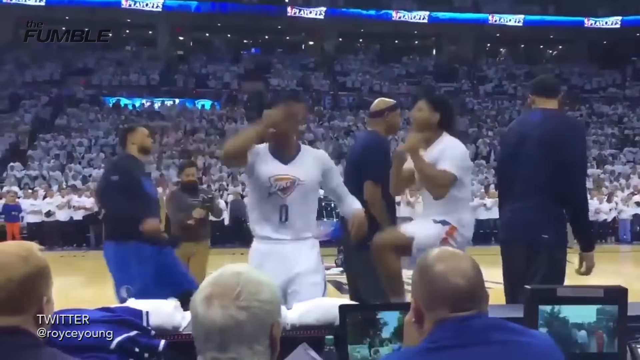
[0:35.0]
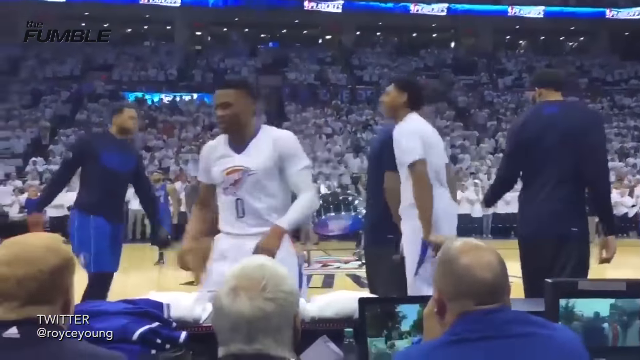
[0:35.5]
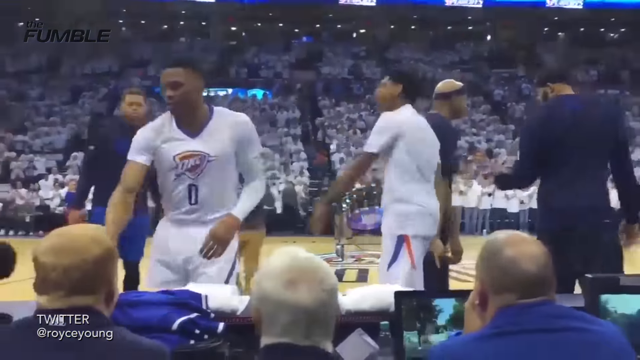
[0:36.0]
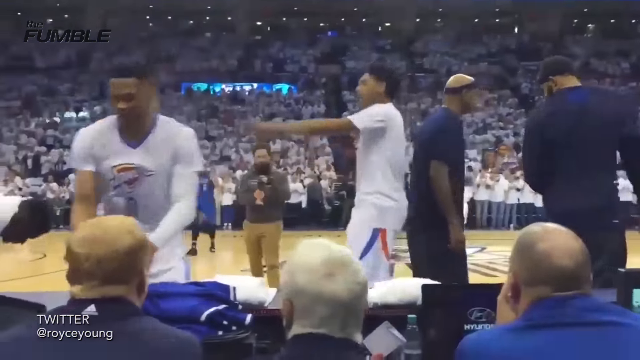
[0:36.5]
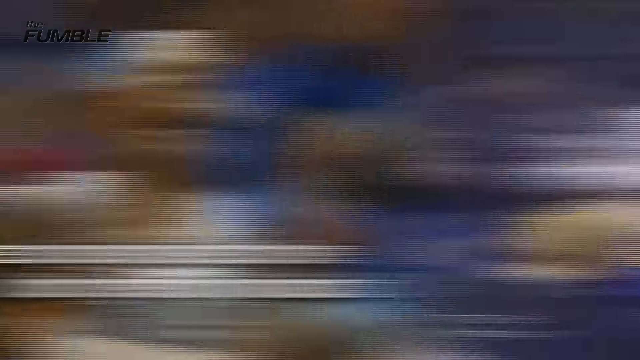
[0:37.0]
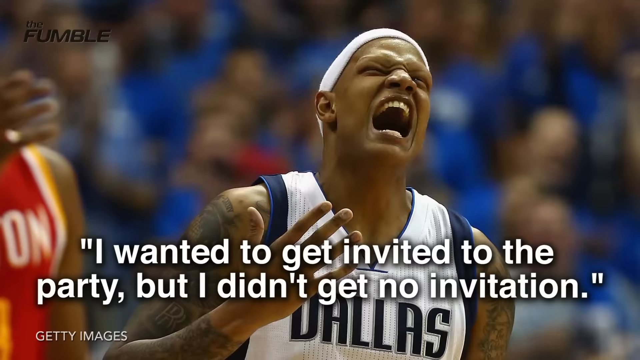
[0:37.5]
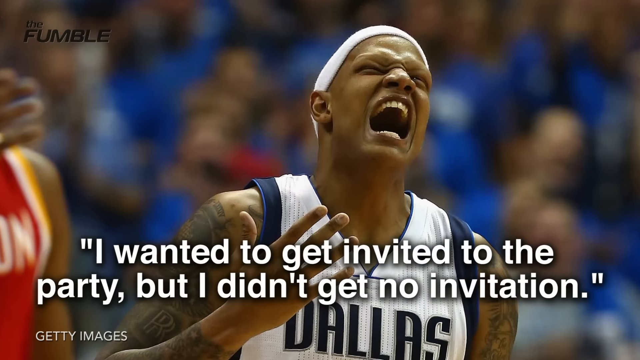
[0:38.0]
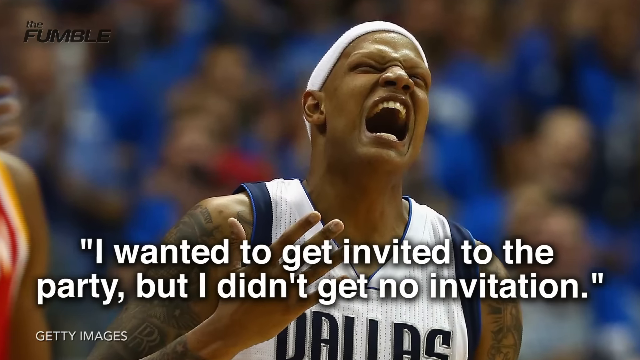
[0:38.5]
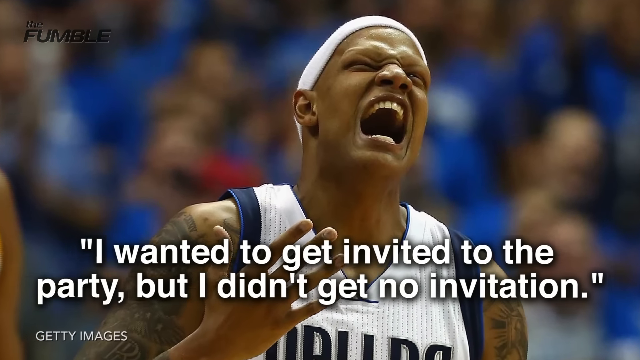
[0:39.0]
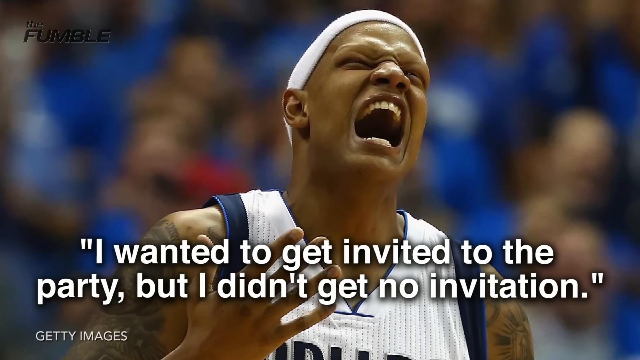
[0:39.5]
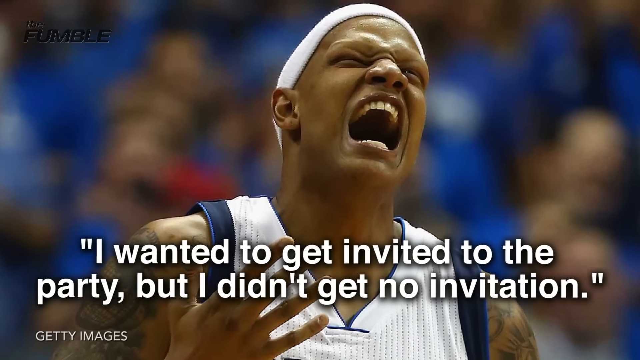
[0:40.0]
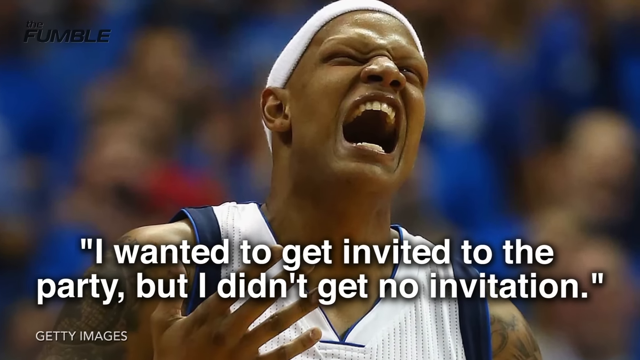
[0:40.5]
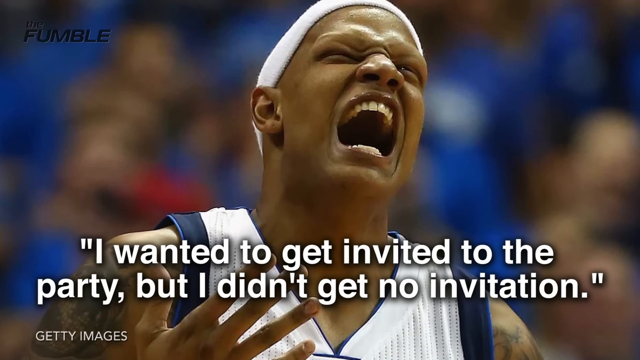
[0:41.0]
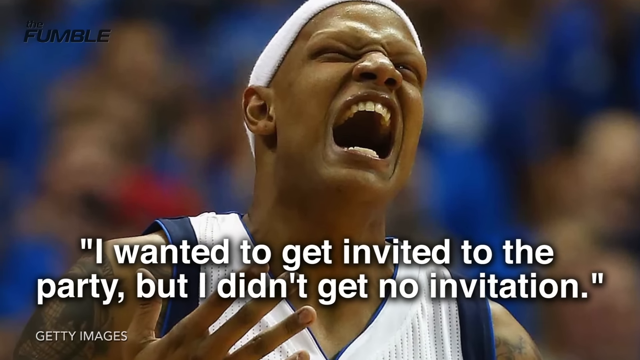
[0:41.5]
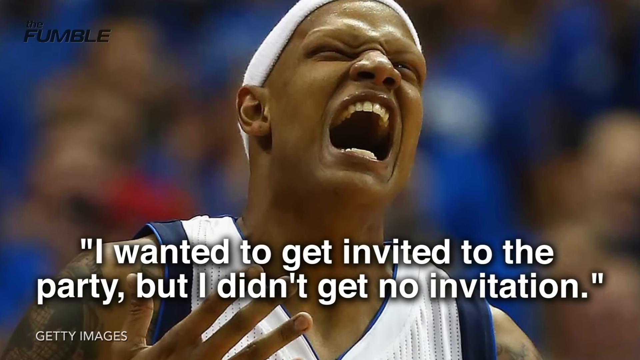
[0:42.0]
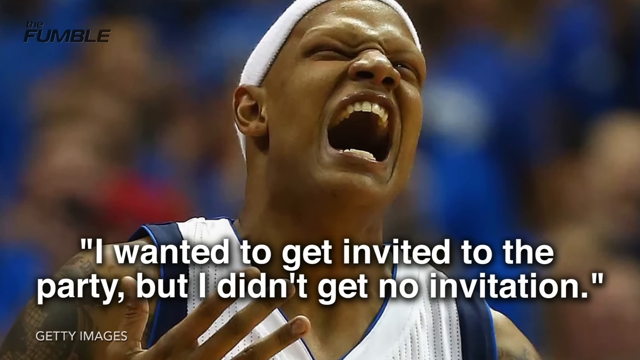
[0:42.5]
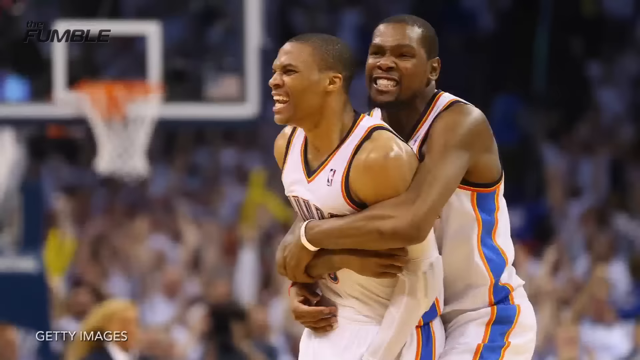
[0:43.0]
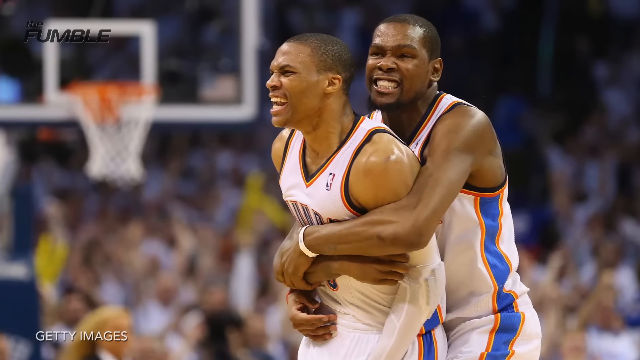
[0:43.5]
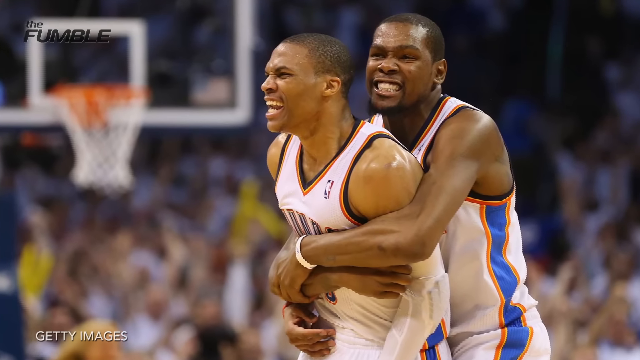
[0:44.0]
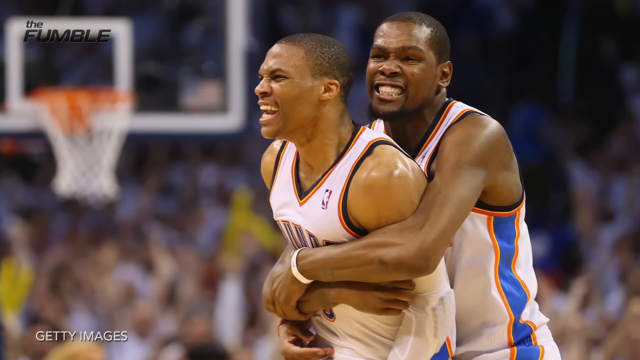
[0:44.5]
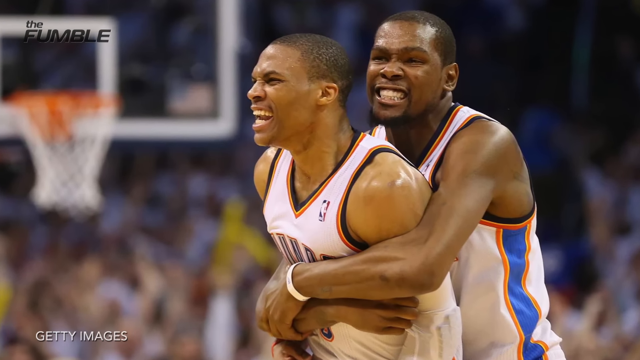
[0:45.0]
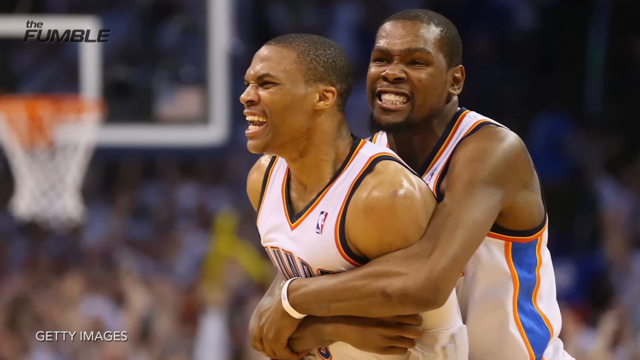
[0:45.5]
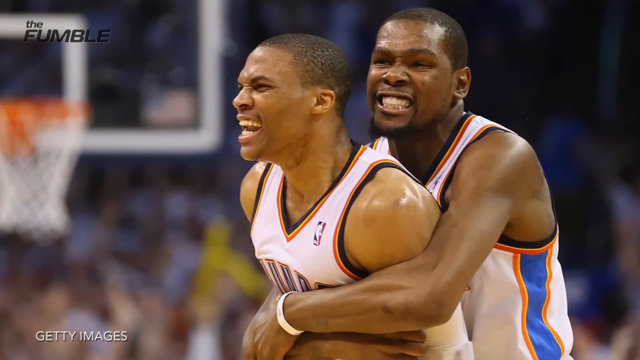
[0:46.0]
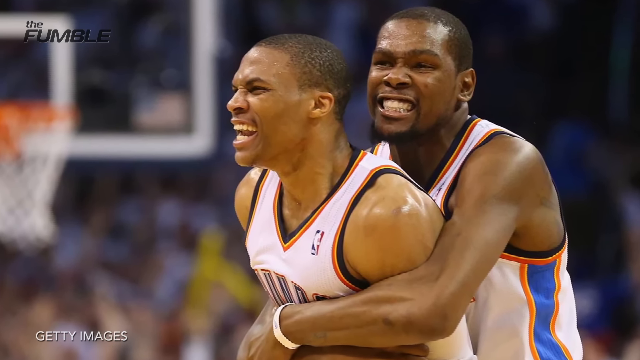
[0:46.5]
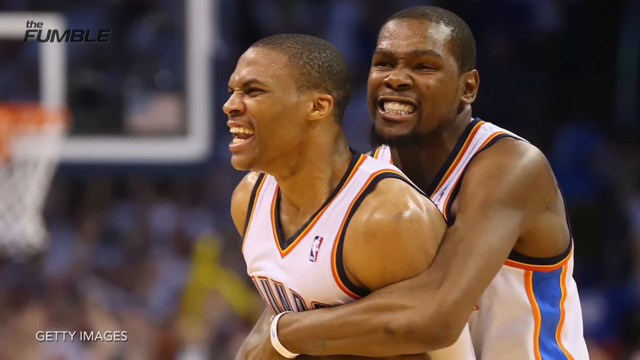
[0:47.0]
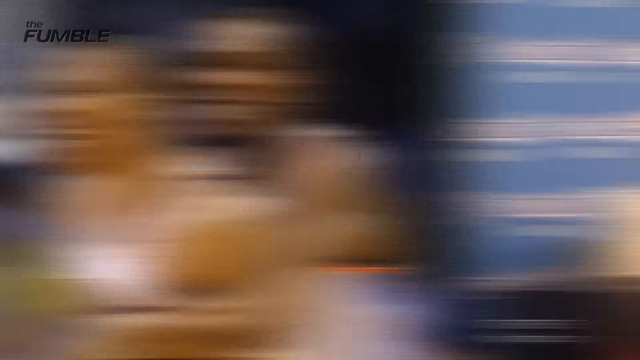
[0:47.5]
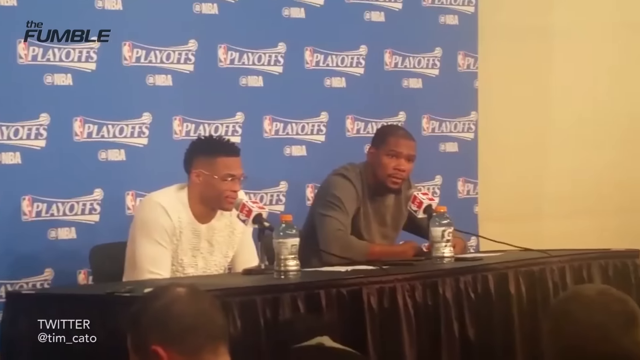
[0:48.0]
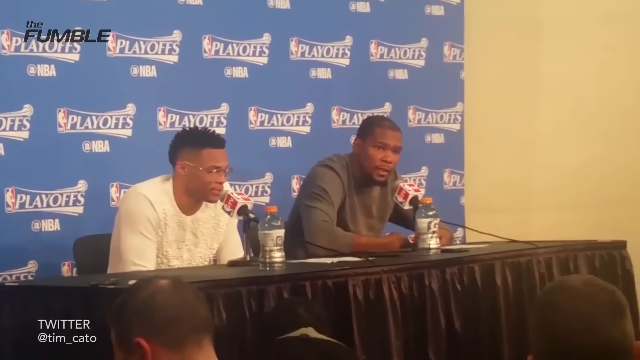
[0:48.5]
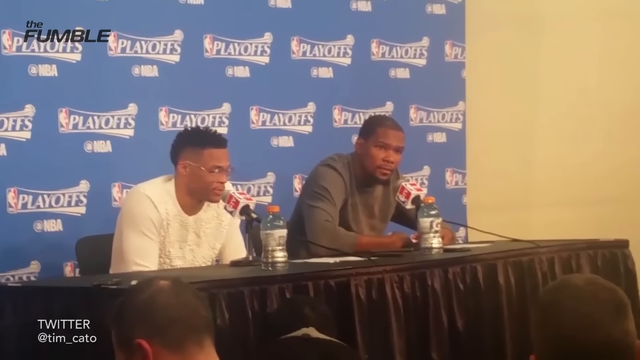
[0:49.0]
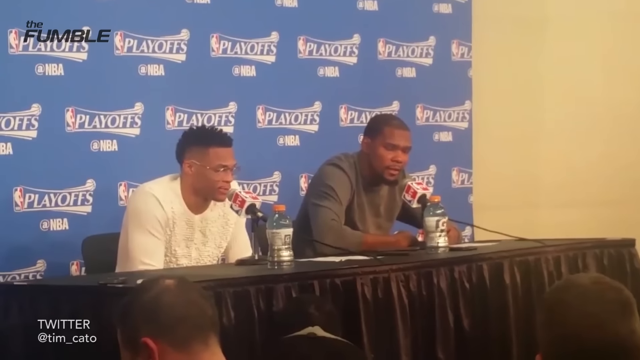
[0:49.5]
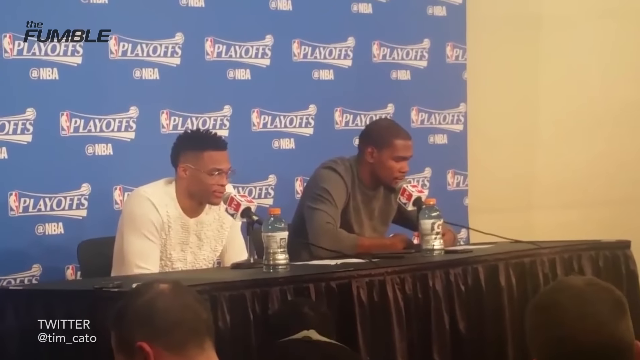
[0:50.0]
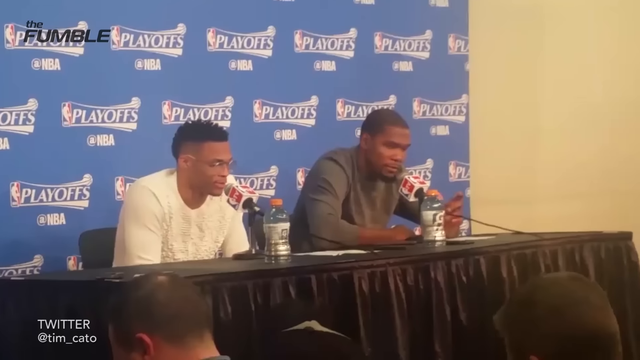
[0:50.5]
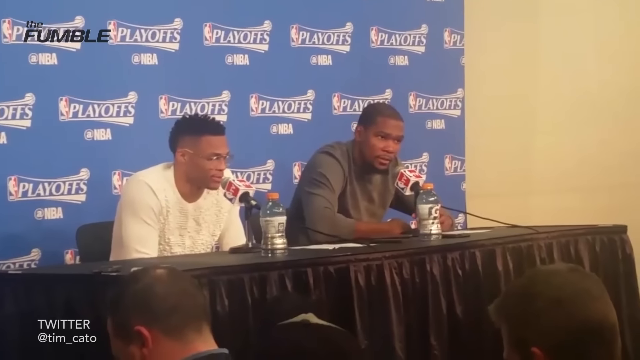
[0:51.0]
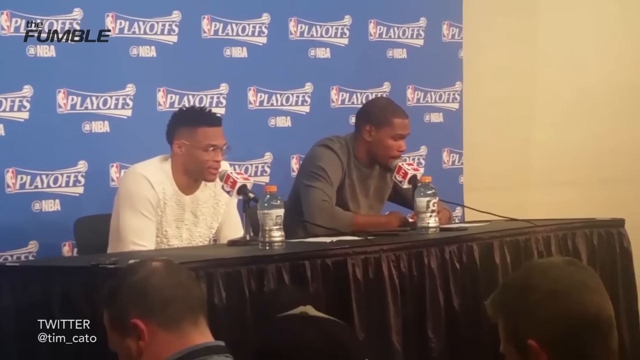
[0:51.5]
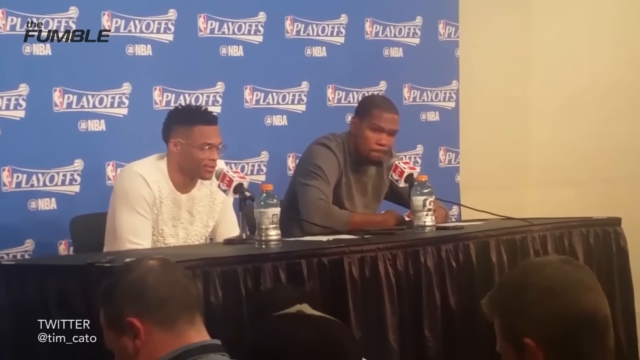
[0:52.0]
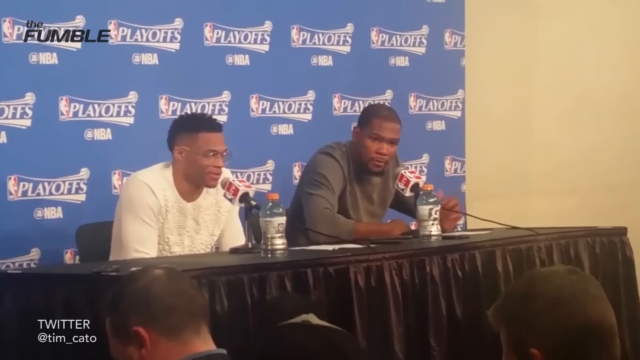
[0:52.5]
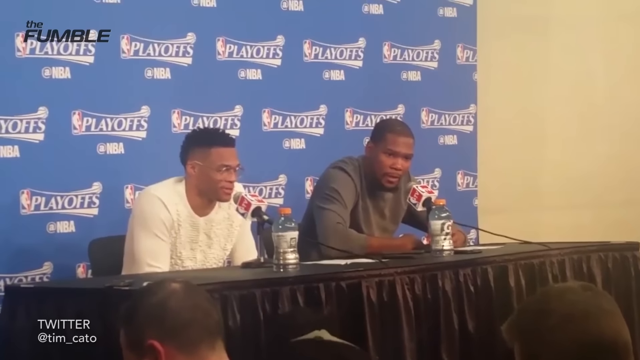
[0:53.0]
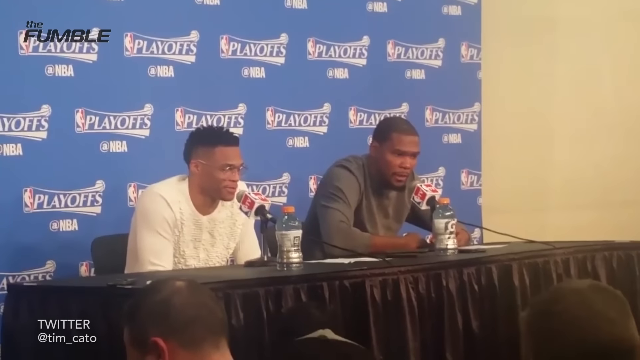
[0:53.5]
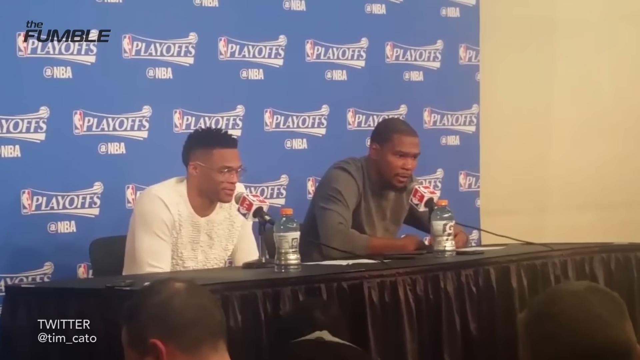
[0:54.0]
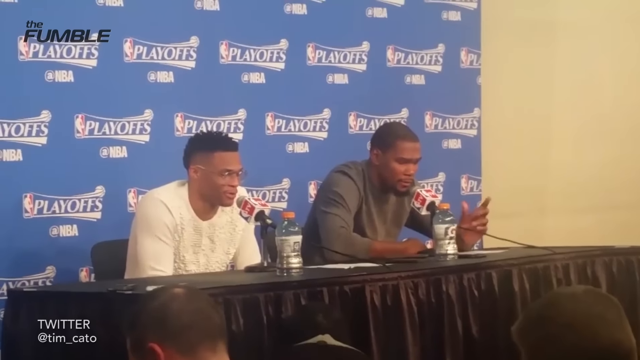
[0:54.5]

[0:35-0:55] The two men appear to be finishing the dance, and a blurb reads "I wanted to get invited to the party but I didn't get the nomination." Another Black basketball player in a white uniform looks unhappy, with a strained look on his face. Next, what seem to be the same two dancers are at a table talking into microphones, probably at a press conference after the game, apparently answering questions from the media. Big bottles of Gatorade or something similar are in front of them. Apart from the press conference, the scenes take place mostly in the sports arena.